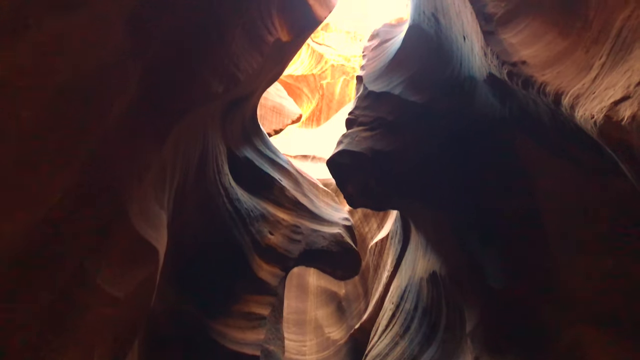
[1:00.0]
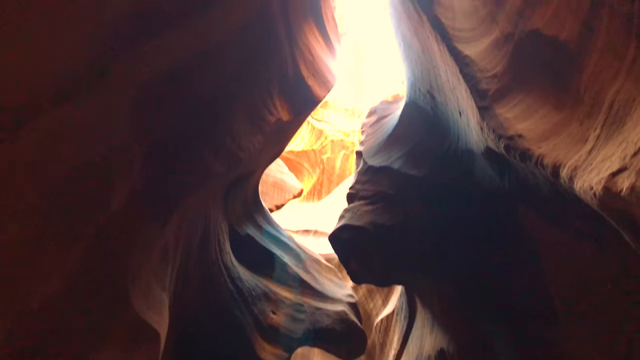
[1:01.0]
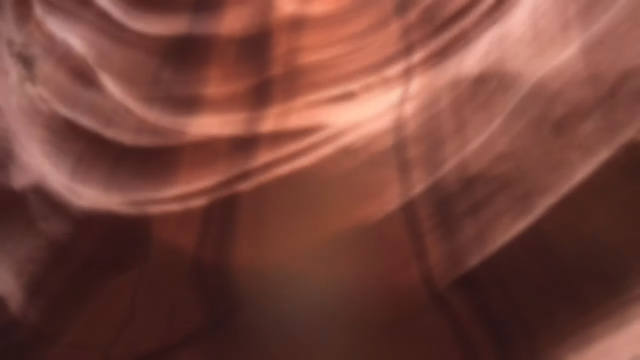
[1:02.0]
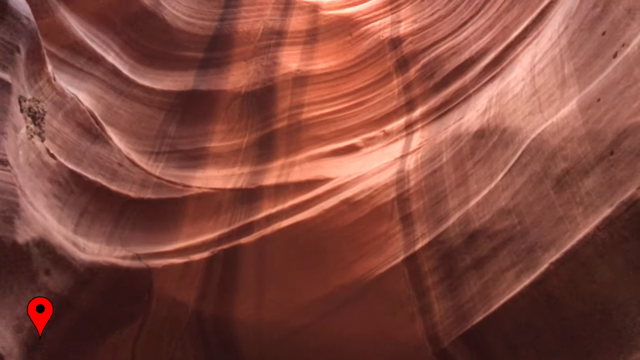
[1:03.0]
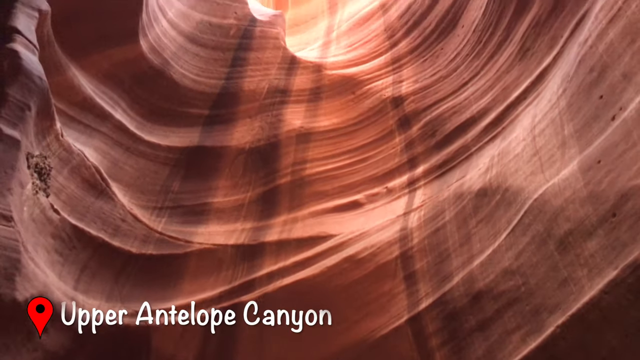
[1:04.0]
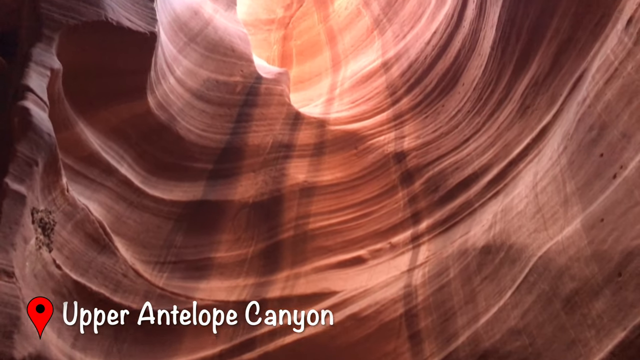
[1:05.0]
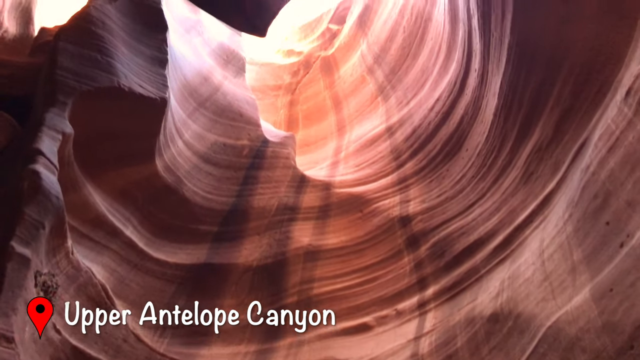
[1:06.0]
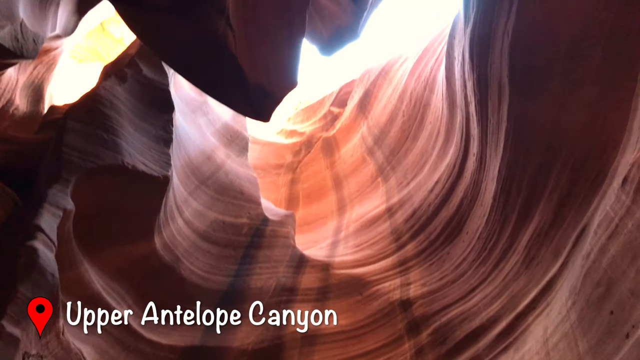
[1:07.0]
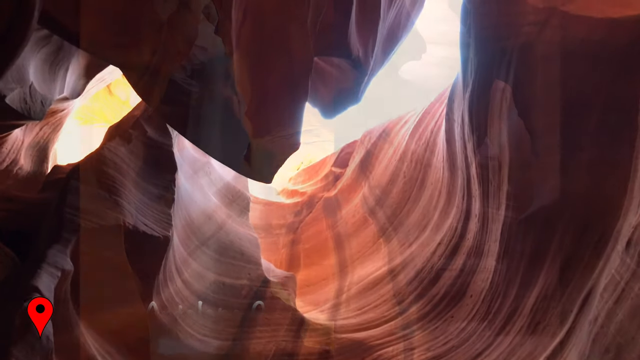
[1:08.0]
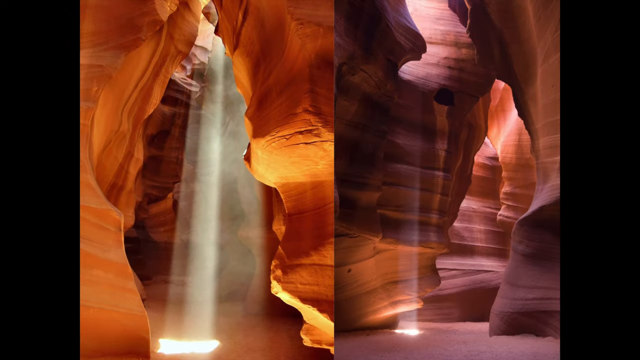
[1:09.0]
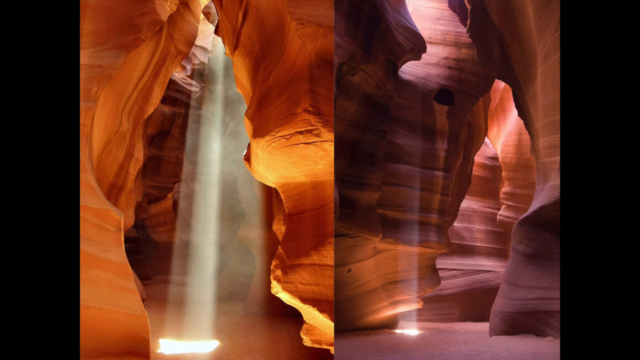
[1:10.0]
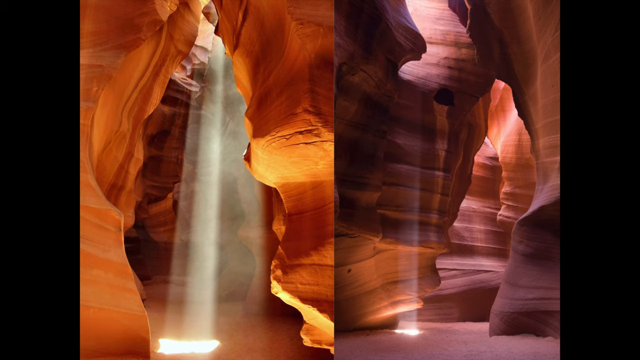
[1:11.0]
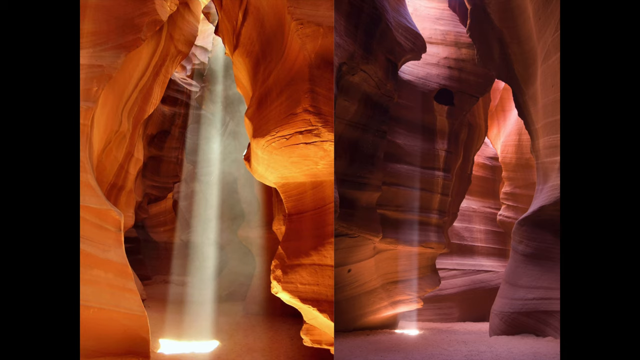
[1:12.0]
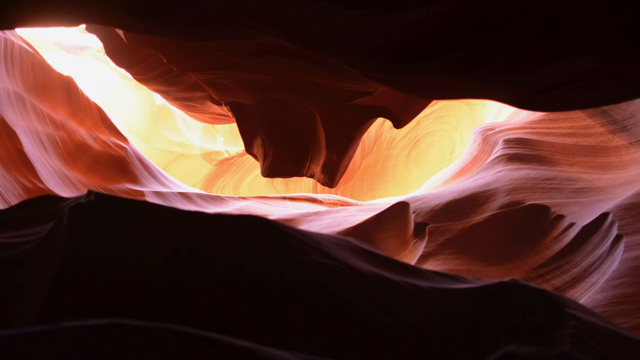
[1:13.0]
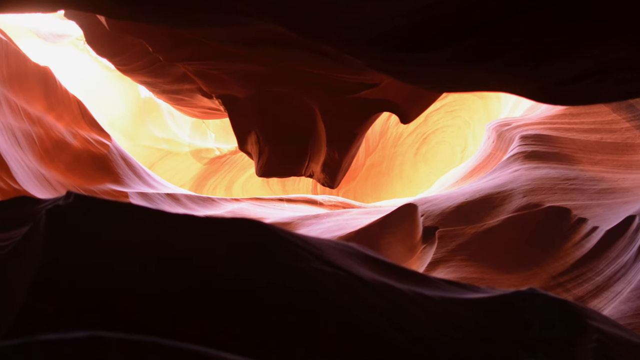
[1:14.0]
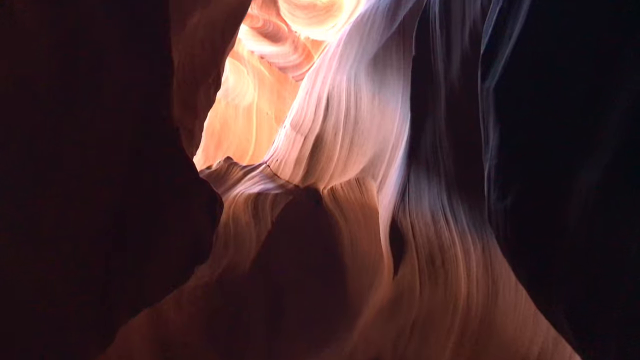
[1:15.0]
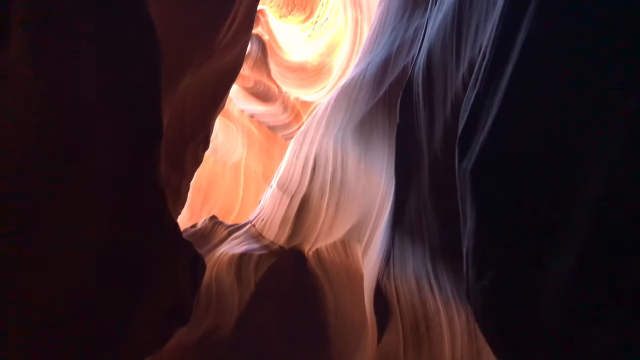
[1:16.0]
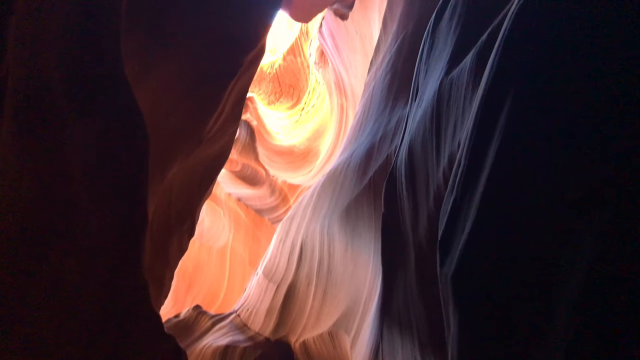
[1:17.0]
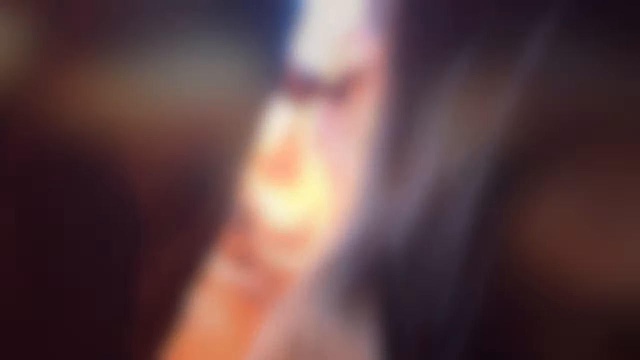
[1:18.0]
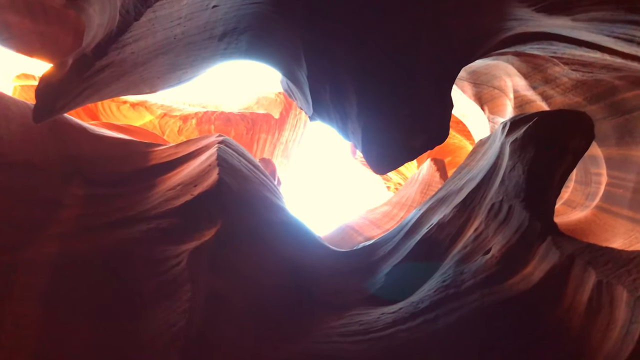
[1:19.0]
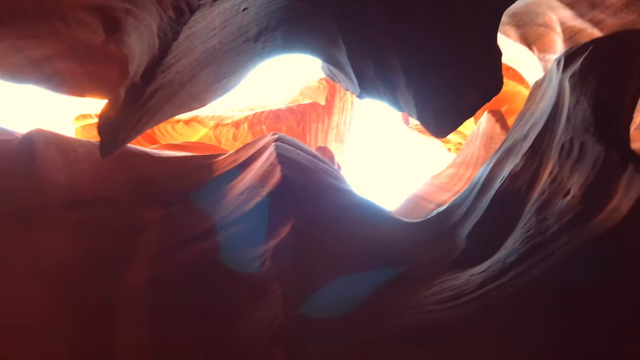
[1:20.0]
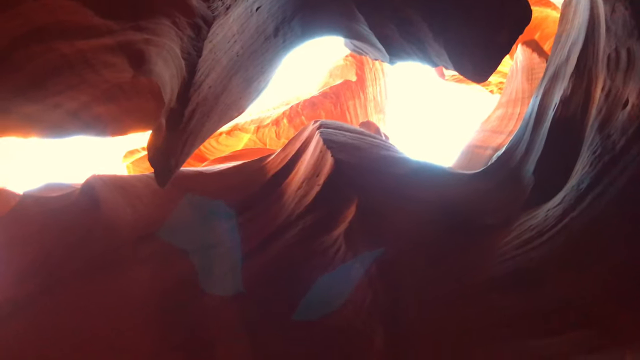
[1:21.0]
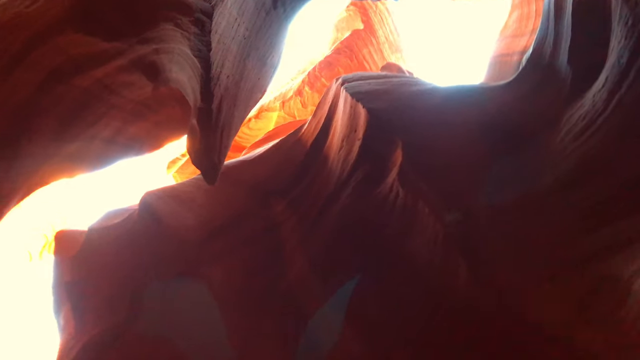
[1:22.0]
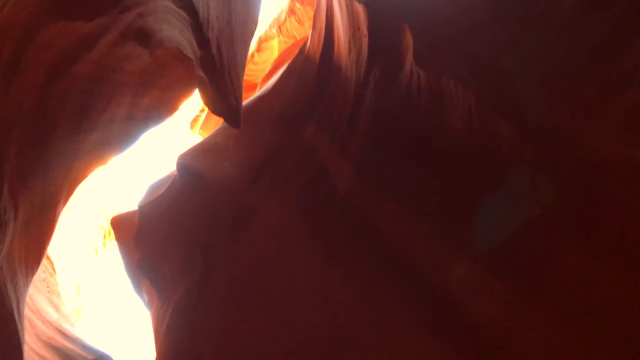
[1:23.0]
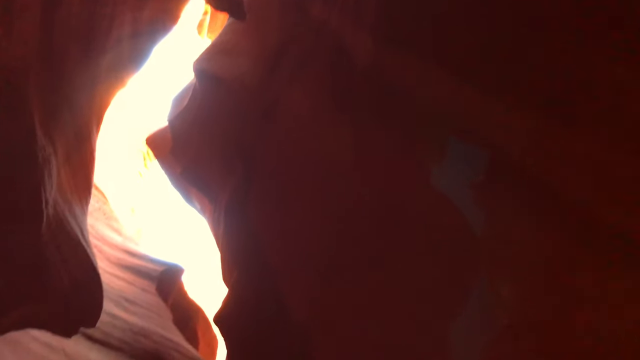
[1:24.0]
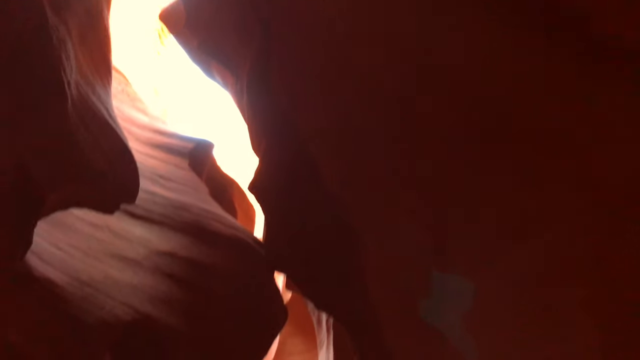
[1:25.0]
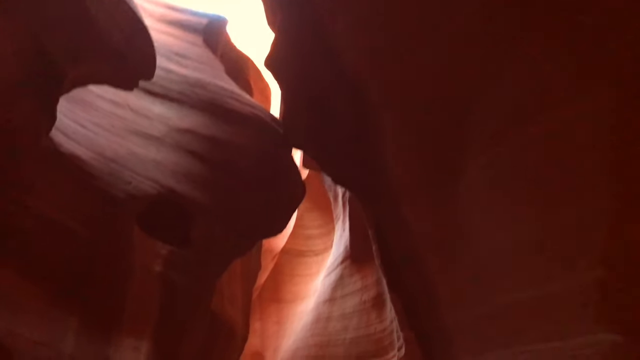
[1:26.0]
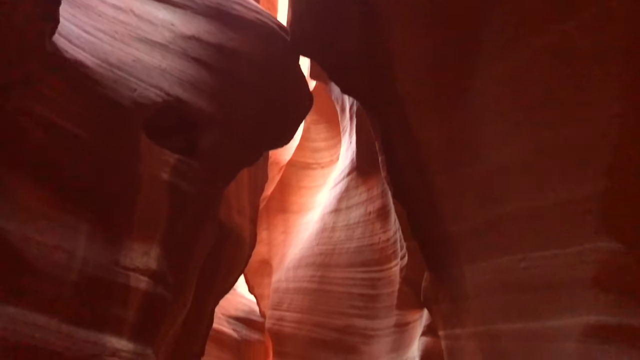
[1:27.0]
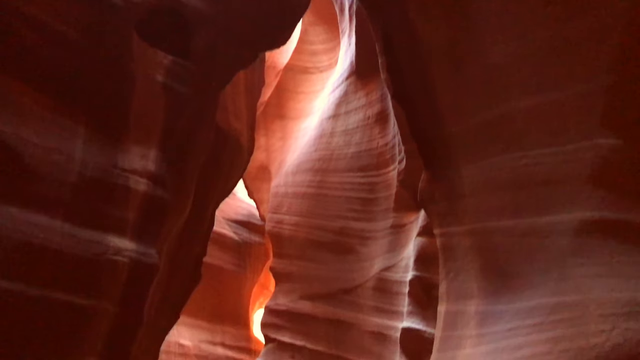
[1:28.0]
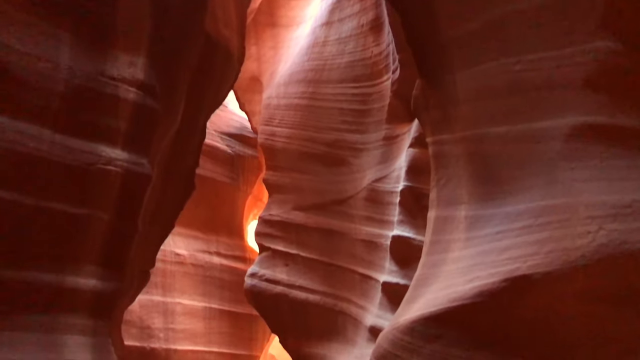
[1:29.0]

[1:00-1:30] Inside Antelope Canyon, the view looks toward the outside, where there is light, while the inside is dark. The path is not very clear and is rocky, but the rocks are well curved and smooth, with different colors forming patterns, including goldish colors, maybe linings of gold. The camera moves upward and blurs. After the blur, another scene inside shows light entering the cave from above. The cave walls have patterns, depressions, crevices and creases in blue and maroon, and some boulders hang on another boulder. Through a crevice, an opening in the roof of the cave, a beam of light enters from the sky above and draws an image as it comes into the cave.